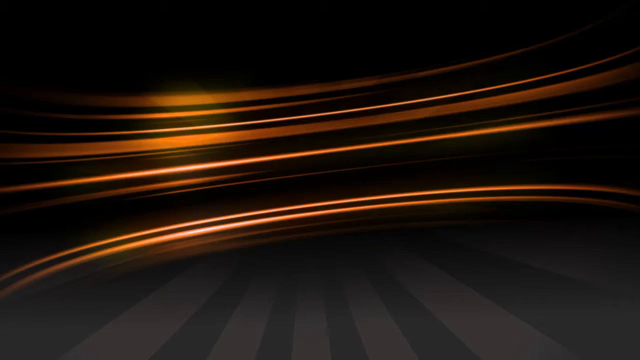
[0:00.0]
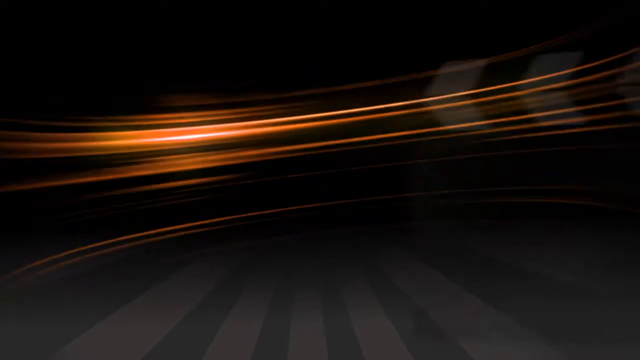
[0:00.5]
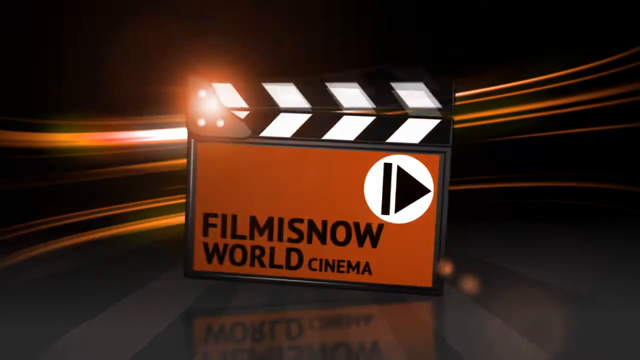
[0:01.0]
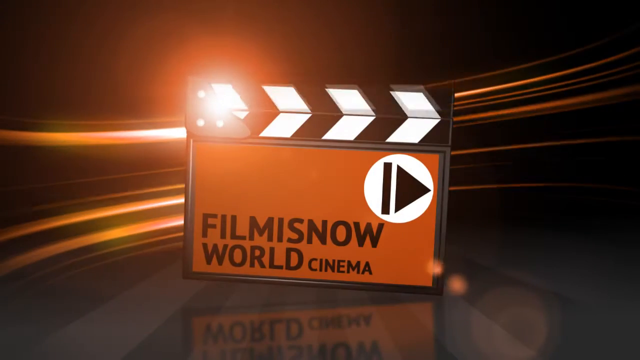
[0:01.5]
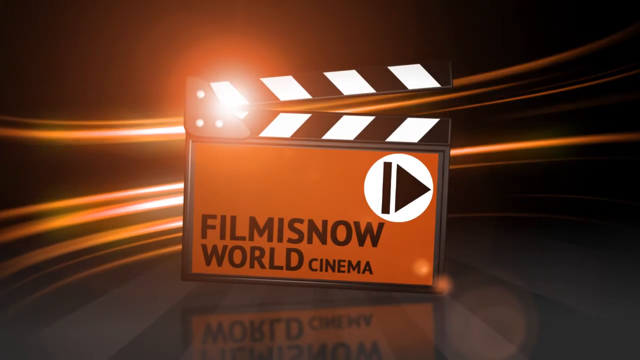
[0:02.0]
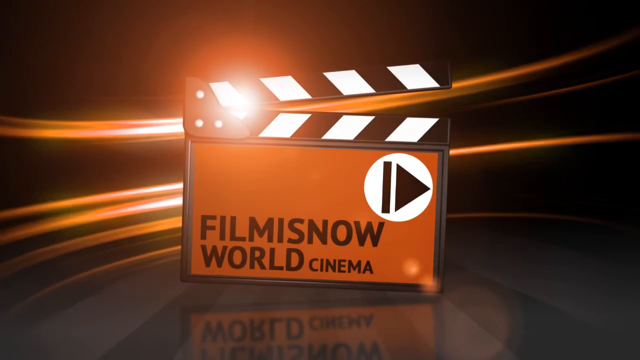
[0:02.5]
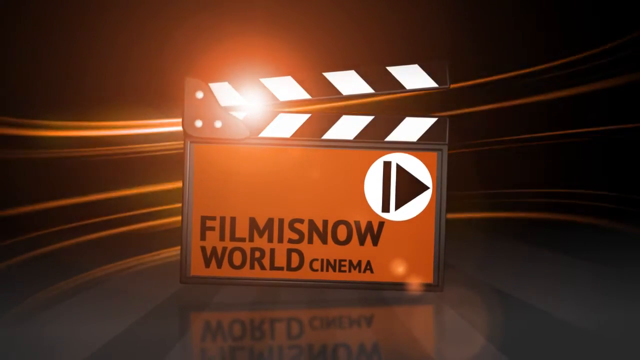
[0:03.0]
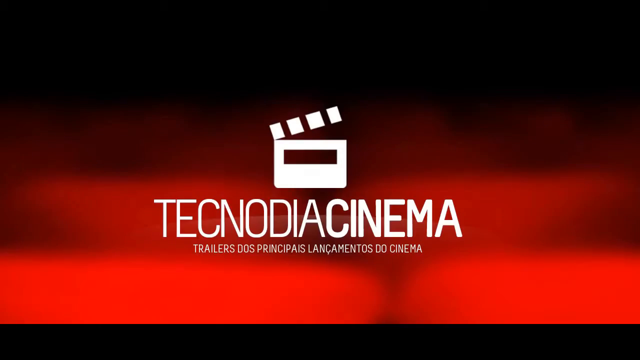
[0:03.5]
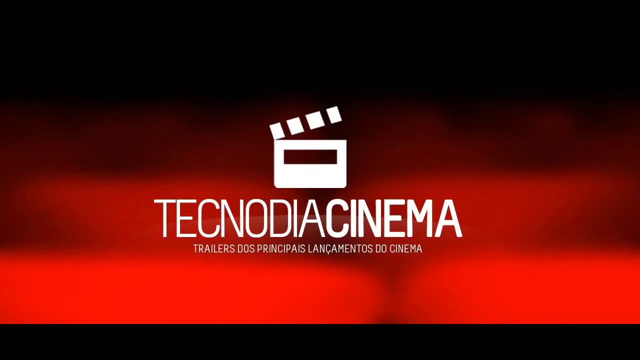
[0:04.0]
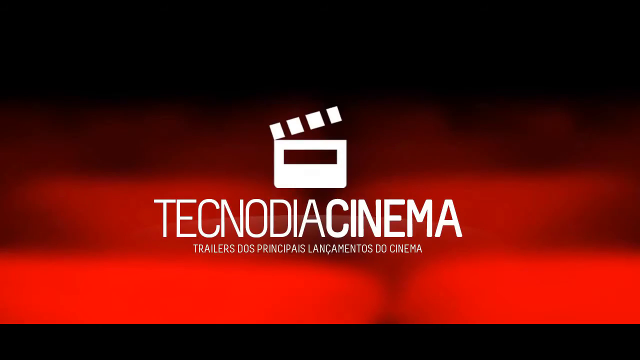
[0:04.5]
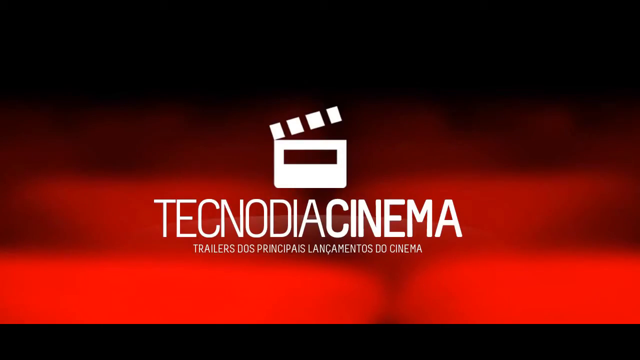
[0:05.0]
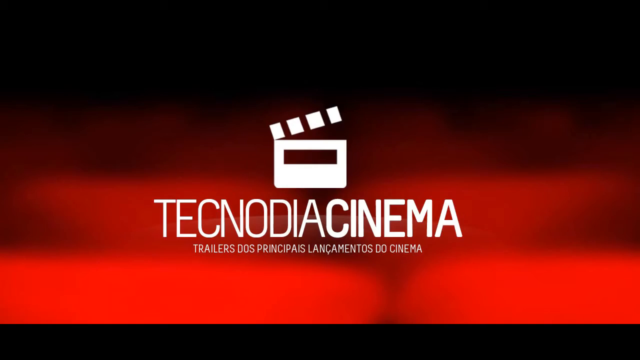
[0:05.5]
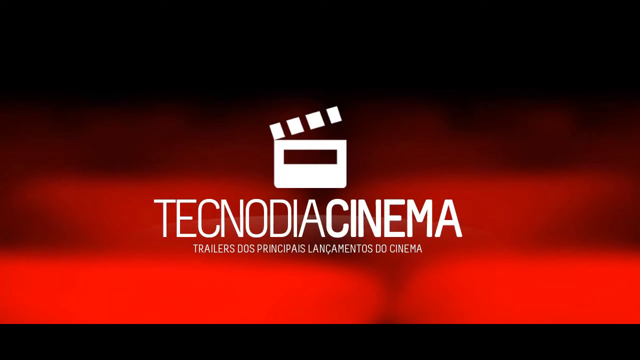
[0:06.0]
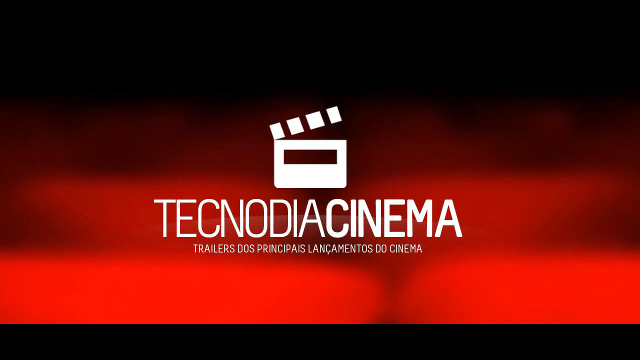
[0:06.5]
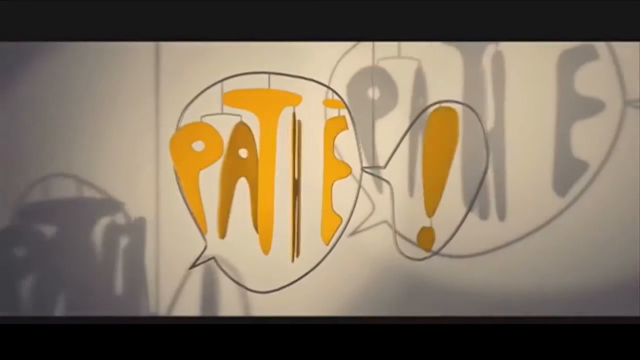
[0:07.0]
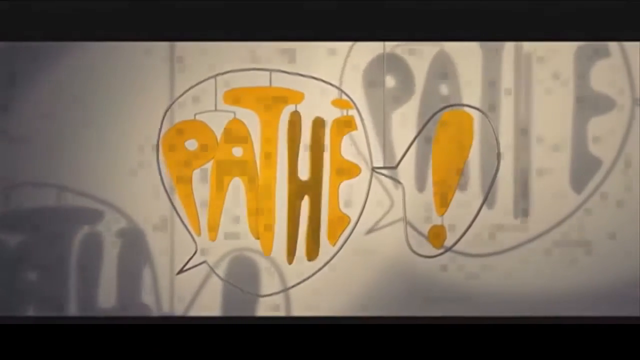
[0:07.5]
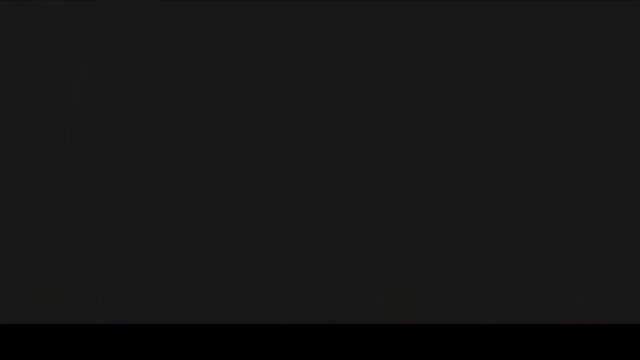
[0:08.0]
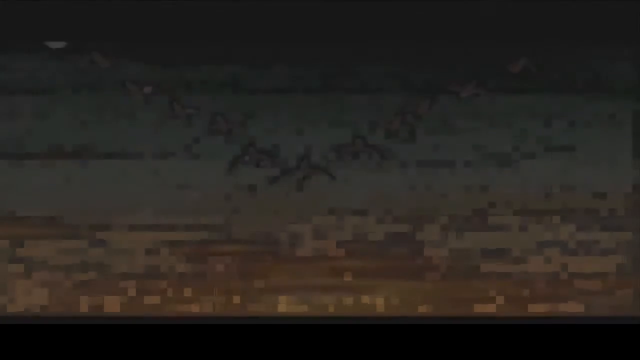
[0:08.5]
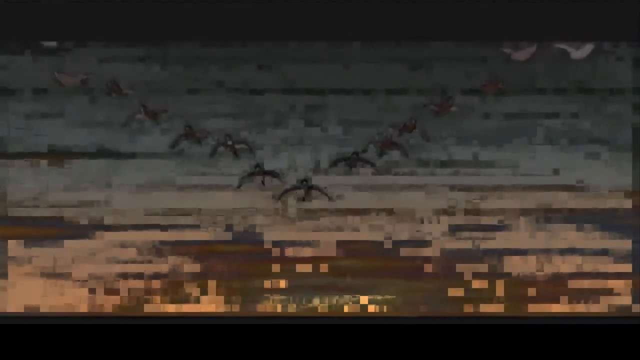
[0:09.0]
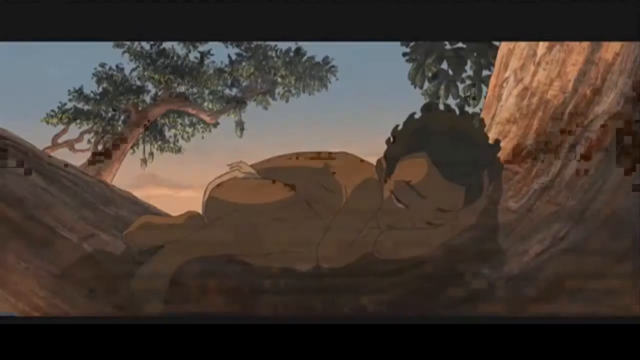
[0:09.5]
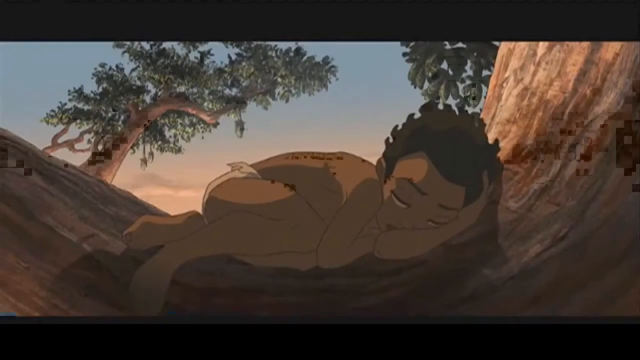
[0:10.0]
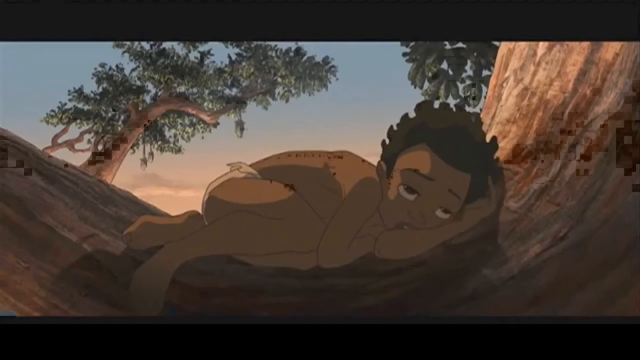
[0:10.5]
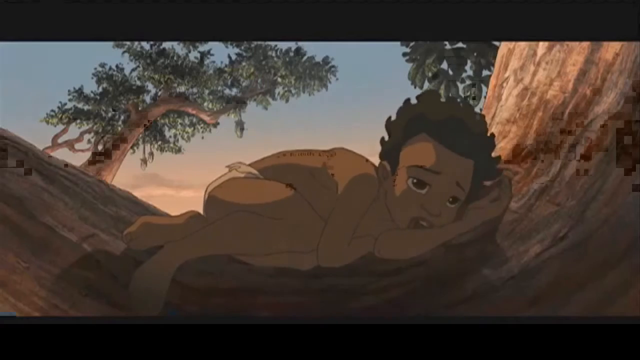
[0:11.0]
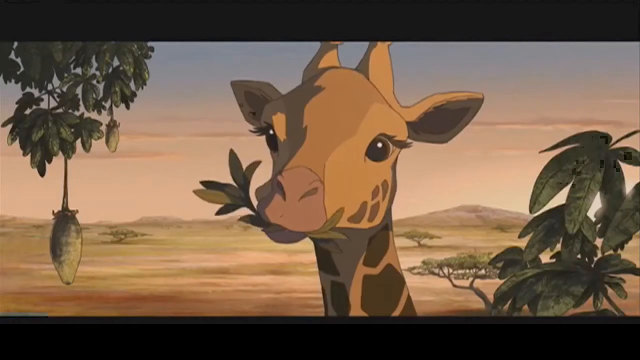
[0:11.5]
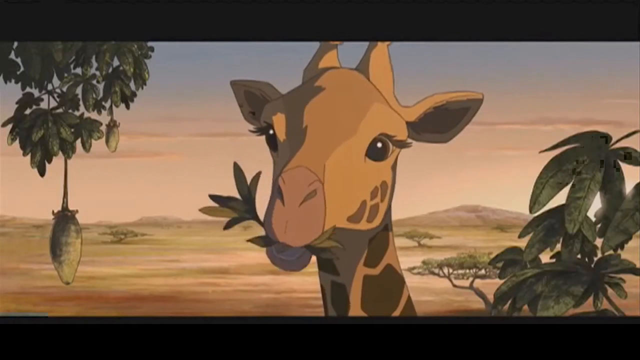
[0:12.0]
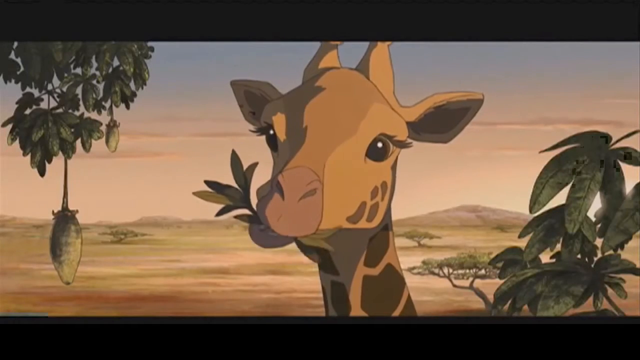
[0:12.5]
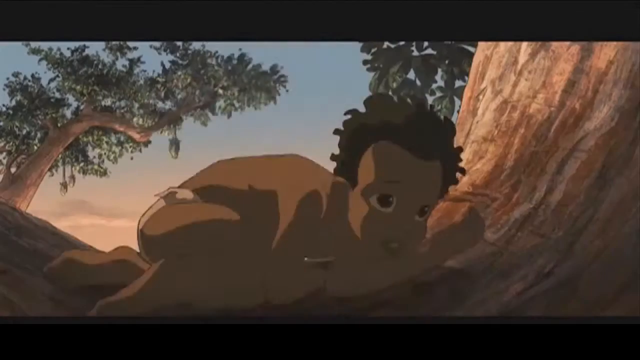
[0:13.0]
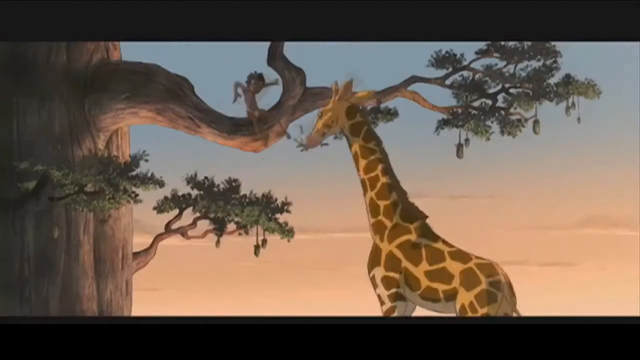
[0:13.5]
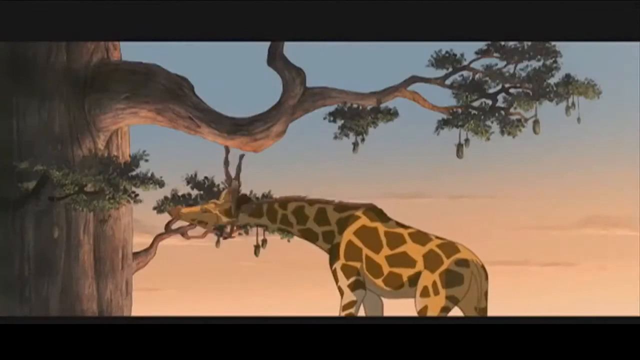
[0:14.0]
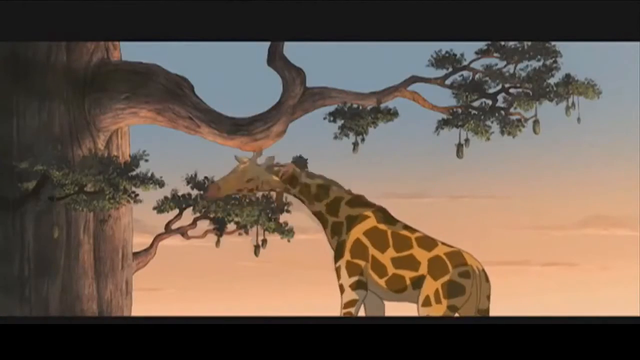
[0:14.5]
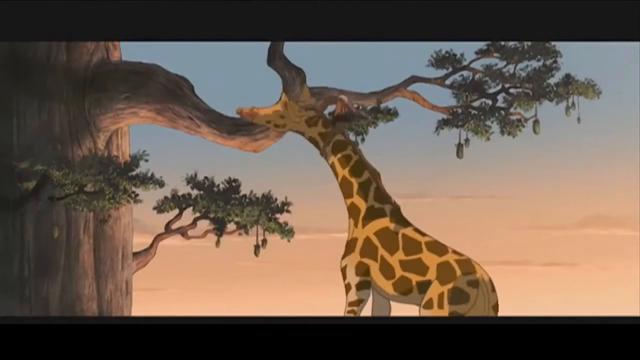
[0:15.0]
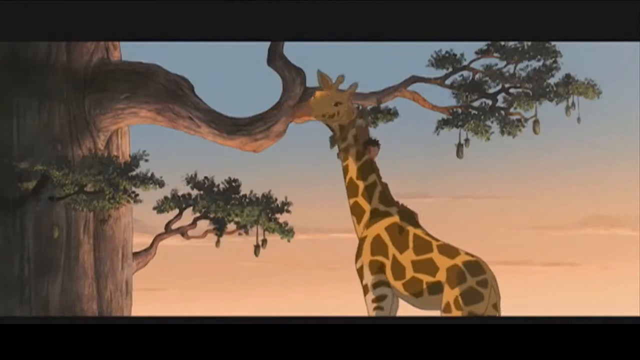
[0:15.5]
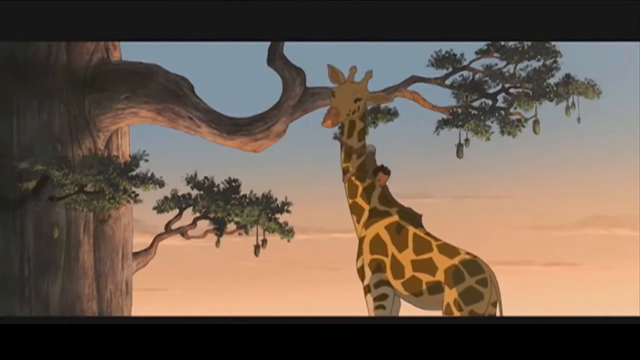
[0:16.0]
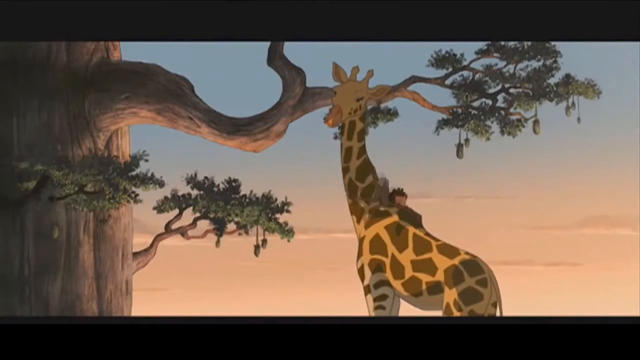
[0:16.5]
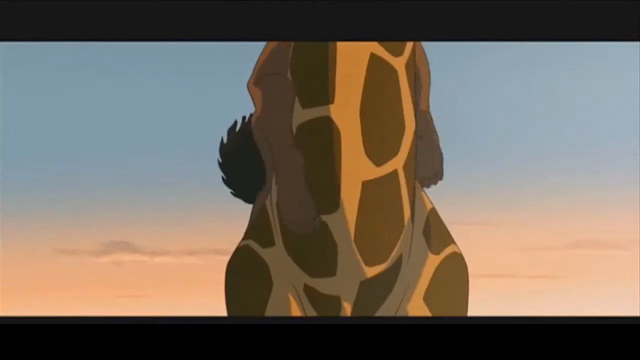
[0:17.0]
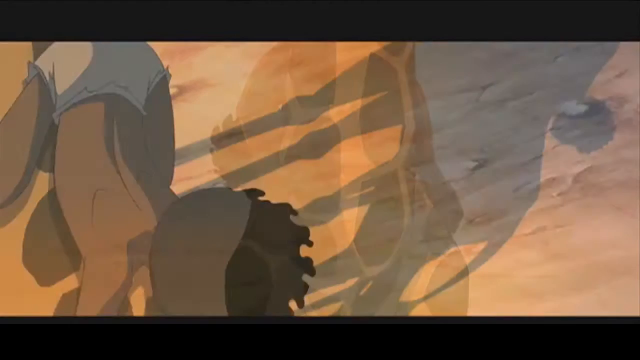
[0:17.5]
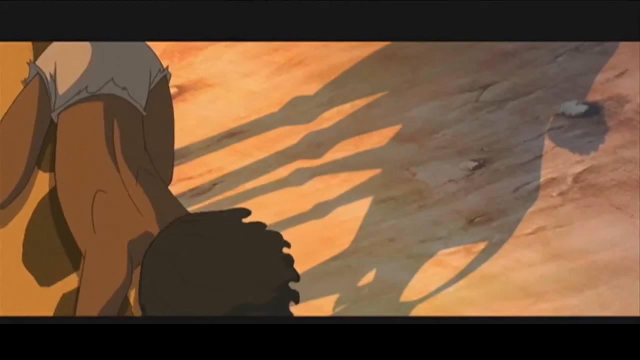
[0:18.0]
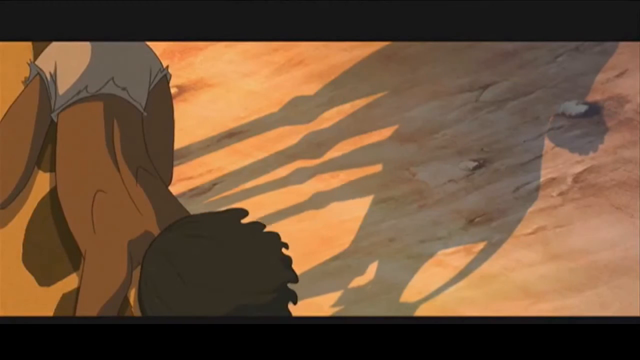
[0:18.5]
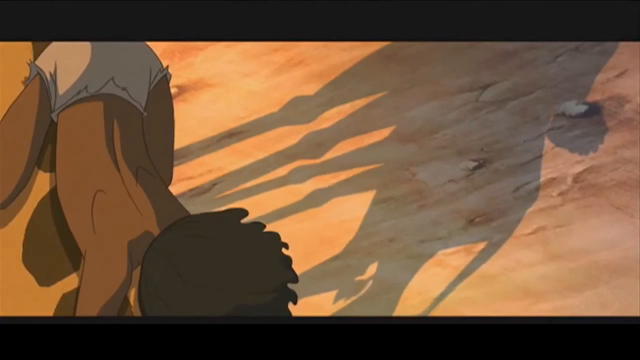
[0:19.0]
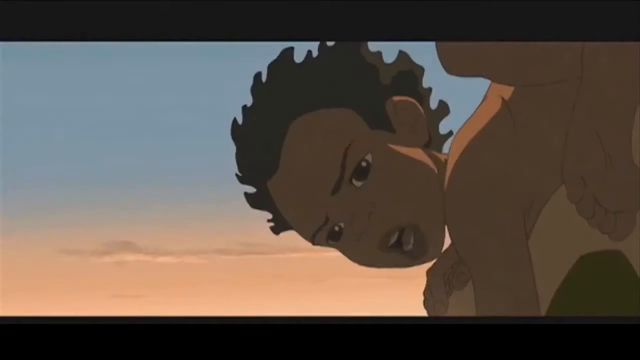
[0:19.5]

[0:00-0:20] The video is a trailer for a movie. It opens with several titles for film production companies and distributors. One appears on a film slate, called "Filmisnowow World Cinema", shown as the slate claps down once. Next, a graphic of a film slate appears over the words "Technodia Cinema", with text in Spanish or Portuguese underneath it. A final one is for the company Pathé, with the name in yellow in what looks like a text bubble and another text bubble coming out of it with a yellow exclamation point. Several scenes from an animated film follow. A young boy is curled up asleep in the branch of a tree and wakes to see a giraffe looking at him, slowly chewing leaves that hang out of its mouth. Startled, he falls out of the branch; the giraffe puts its neck down to catch him, and he lands on its neck and slides down it to the giraffe's back.